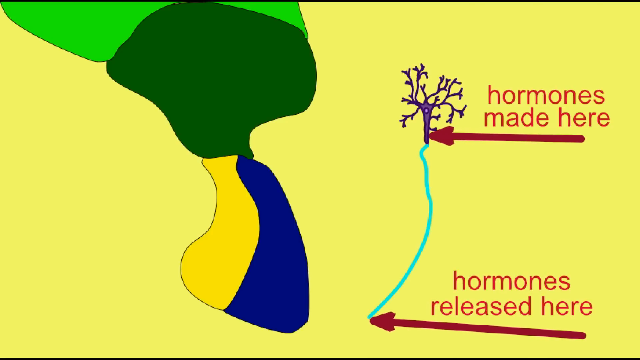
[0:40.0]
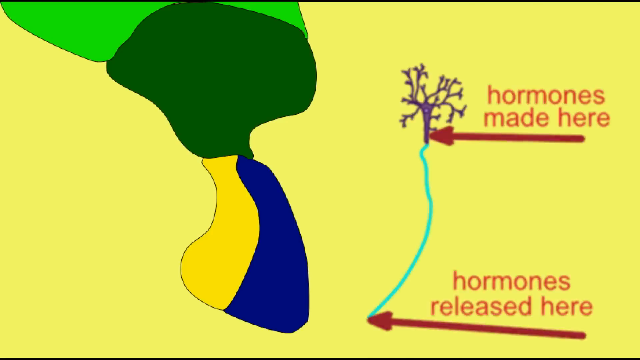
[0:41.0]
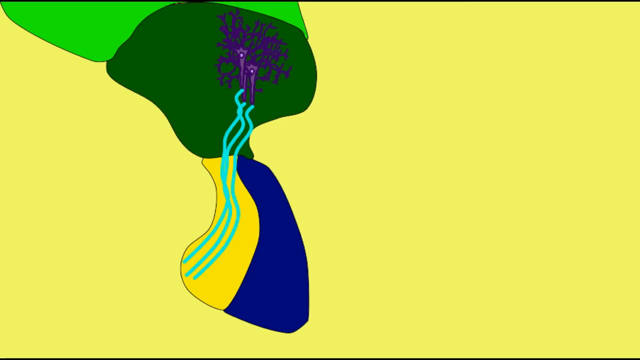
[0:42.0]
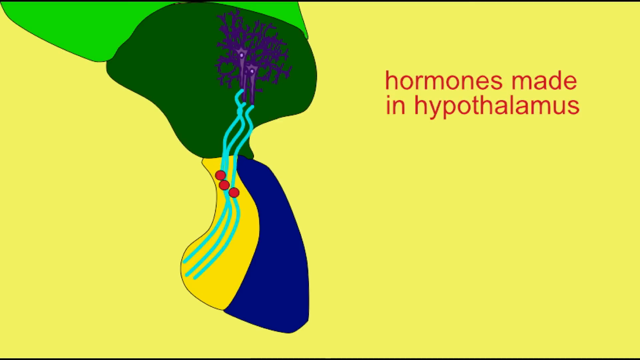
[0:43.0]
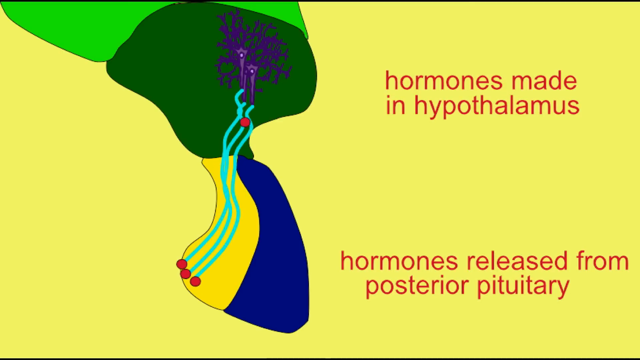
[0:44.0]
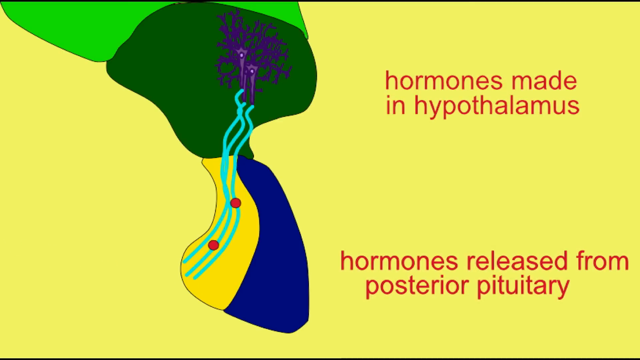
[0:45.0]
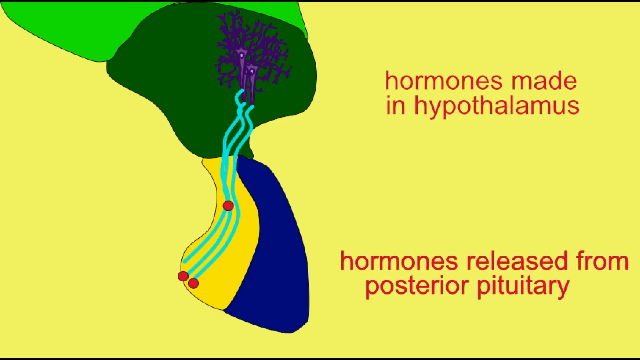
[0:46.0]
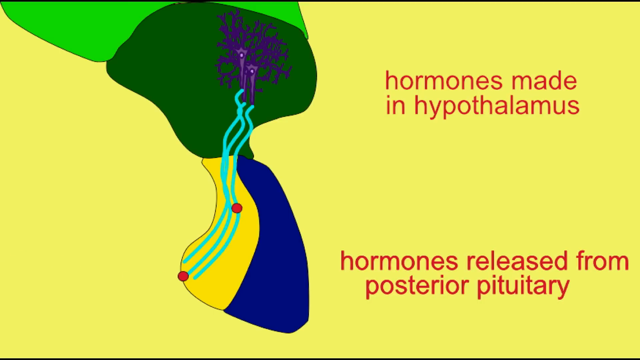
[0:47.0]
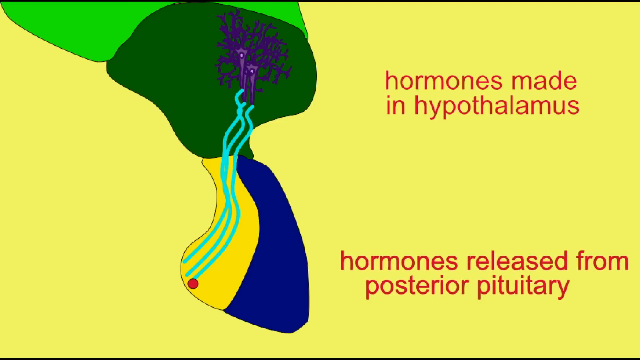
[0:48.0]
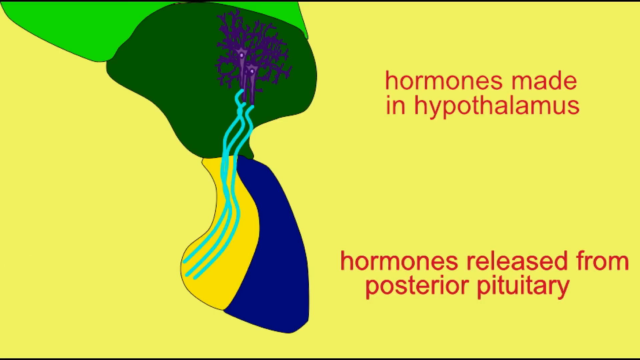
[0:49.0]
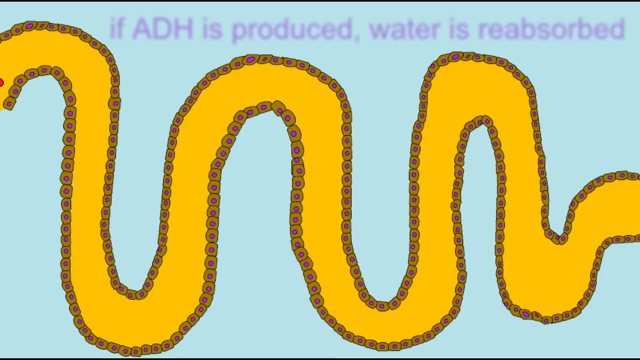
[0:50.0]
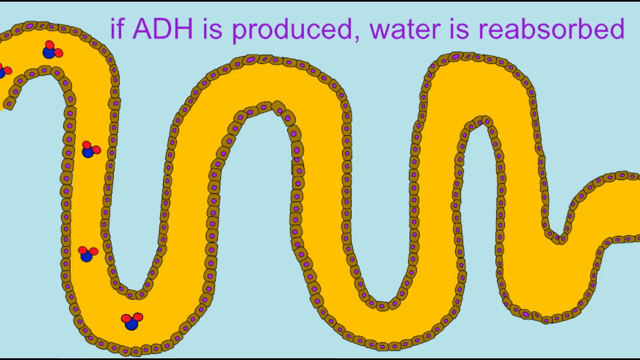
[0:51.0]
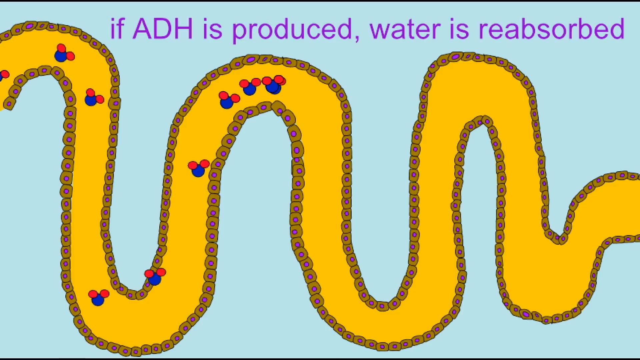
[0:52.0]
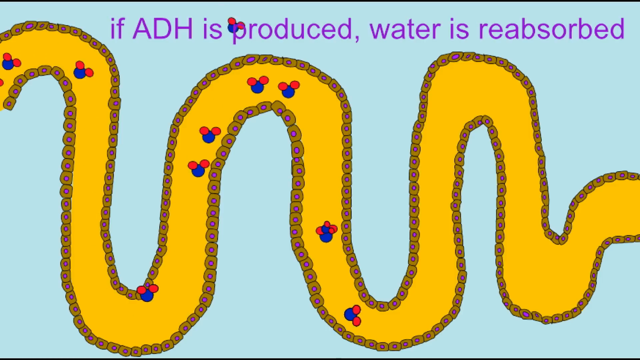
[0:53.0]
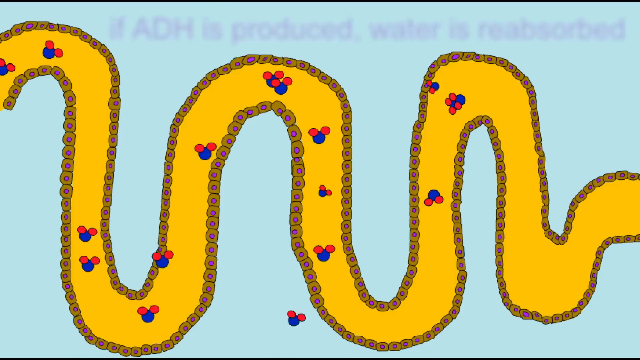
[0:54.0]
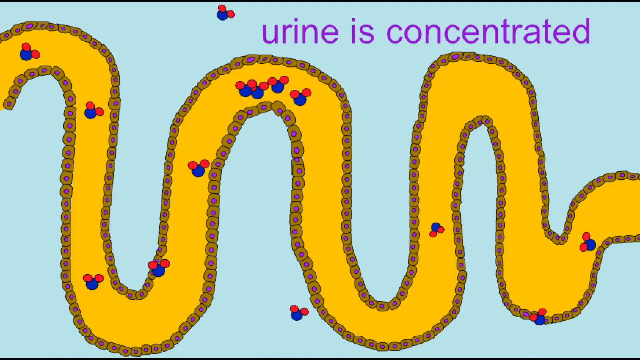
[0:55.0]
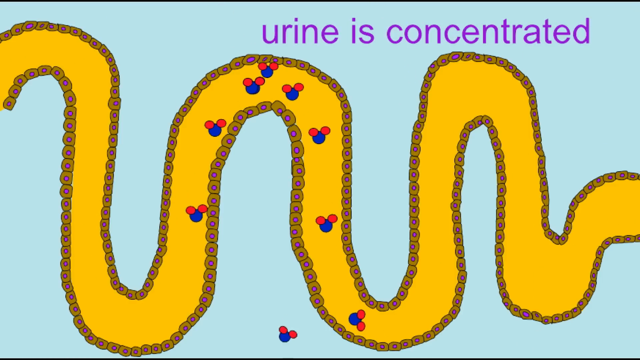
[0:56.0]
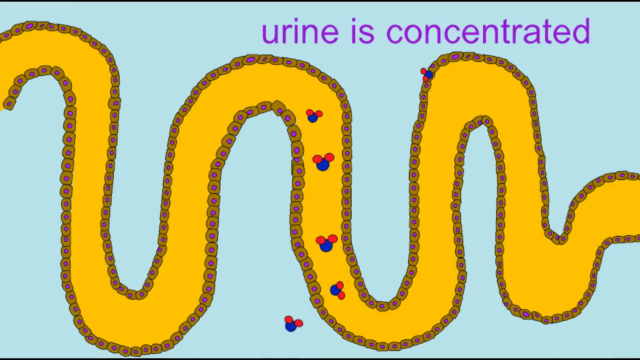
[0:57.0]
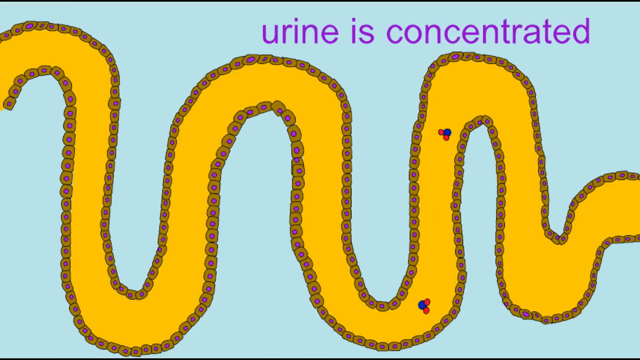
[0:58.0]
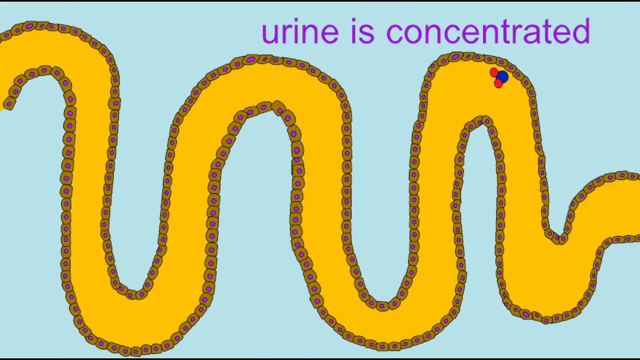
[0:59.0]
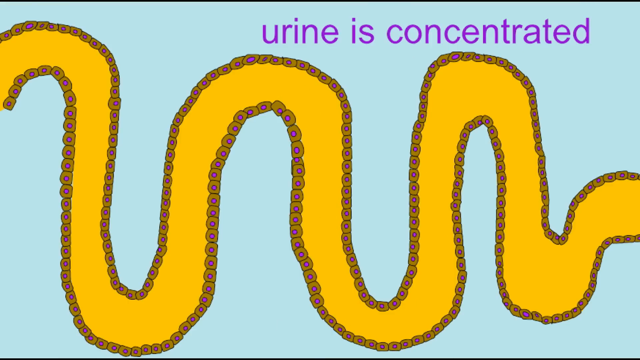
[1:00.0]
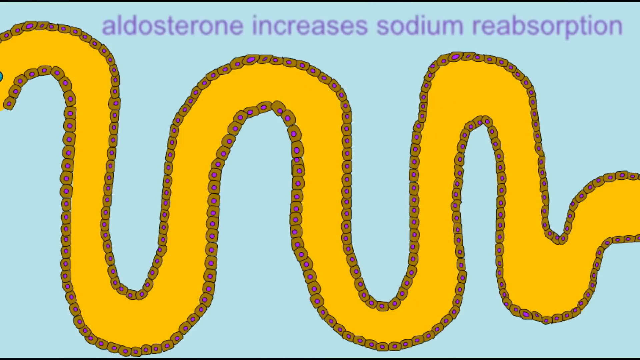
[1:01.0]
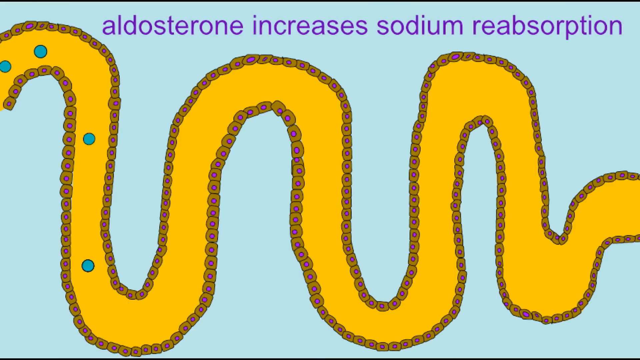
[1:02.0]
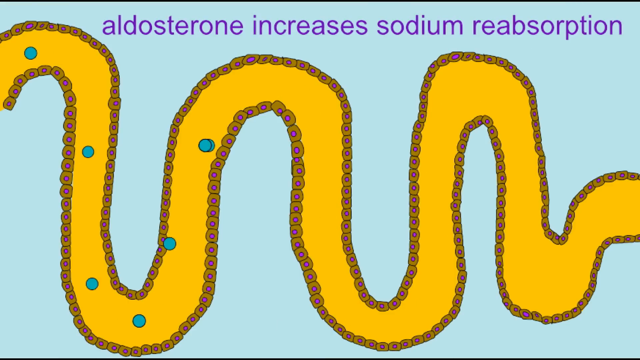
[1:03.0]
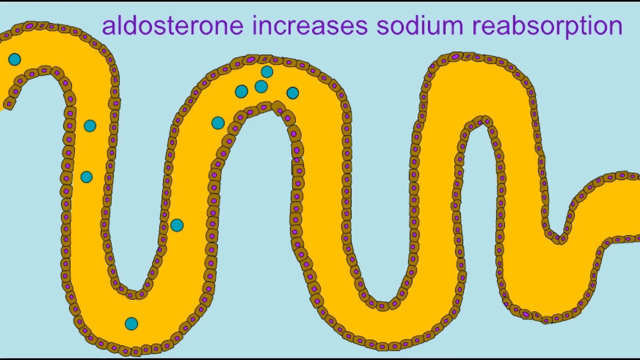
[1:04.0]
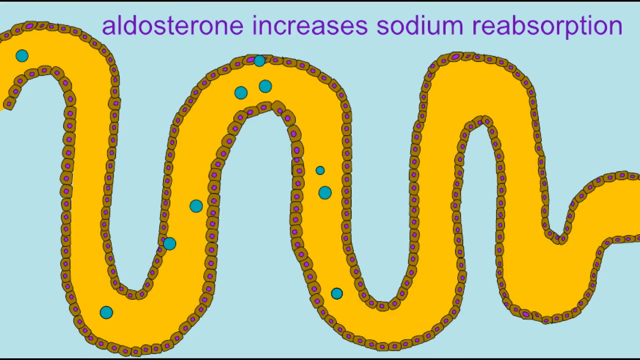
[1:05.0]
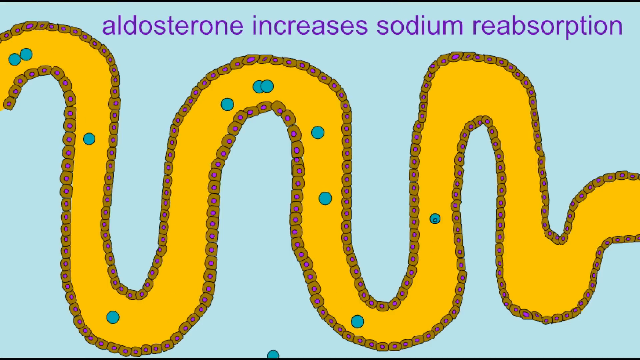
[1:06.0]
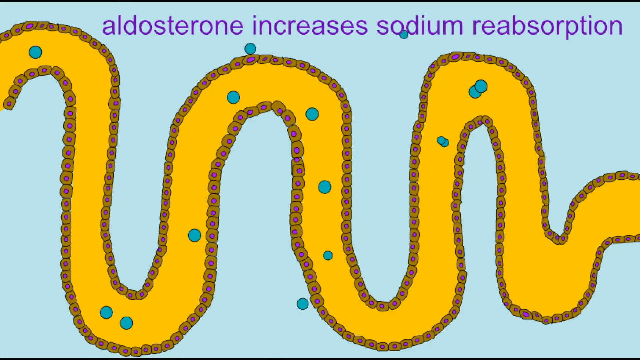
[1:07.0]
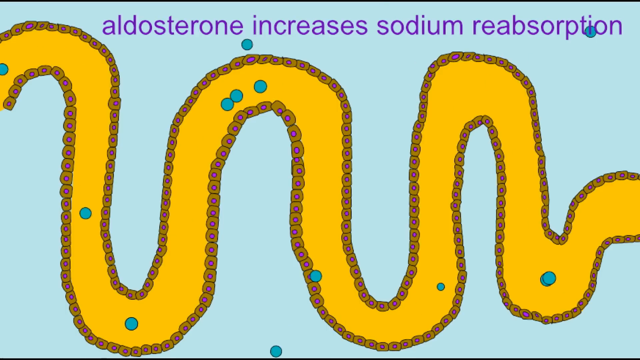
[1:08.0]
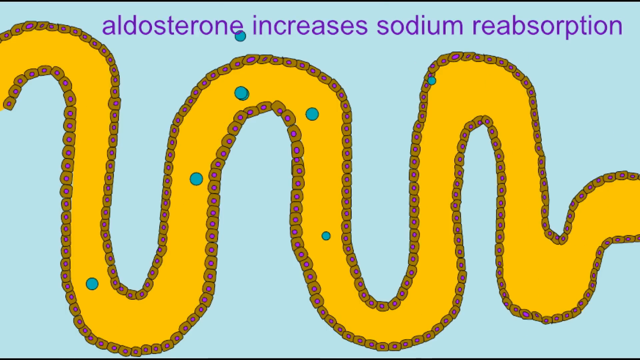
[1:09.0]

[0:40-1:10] The text "hormones made here," in red, is pointed at the purple object with a red arrow. The text "hormones are released here" is pointed toward the blue line with another red arrow. The background is yellow. The purple object moves into the other object, and many white-blue strings now come out of it. The hormones are shown as red dots that travel down the line and are released off the screen. Next appears a red and yellow object that looks like a snake: it goes up and down and has two sides. Its border is a darker yellow with red dots. In the middle of this object is a blue dot with two red dots on it. Objects fly through the snake-like object very quickly, and some fall out of it; none make it to the end, all flying out before they reach the other side. A blue dot then passes through the object. Again all of them are kicked out, with only a few getting close to the ends, but none reaching the actual end.